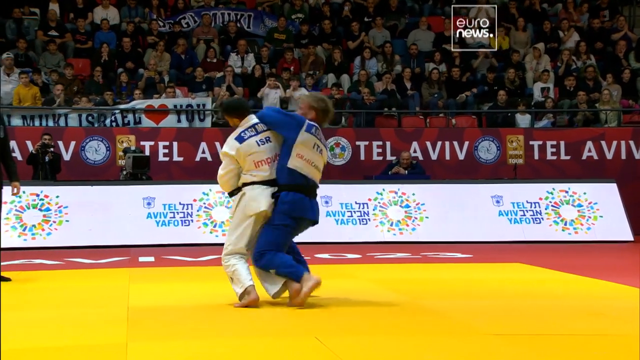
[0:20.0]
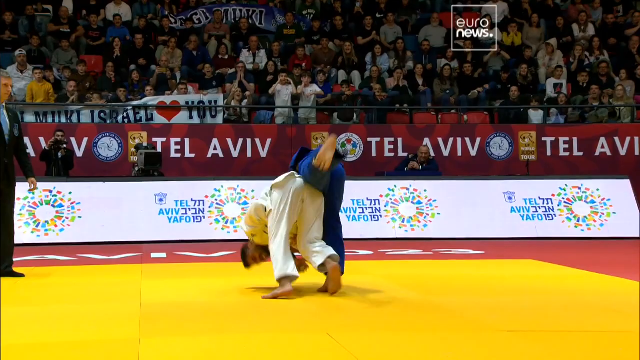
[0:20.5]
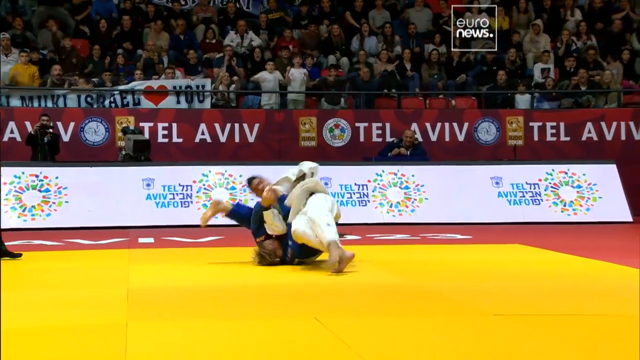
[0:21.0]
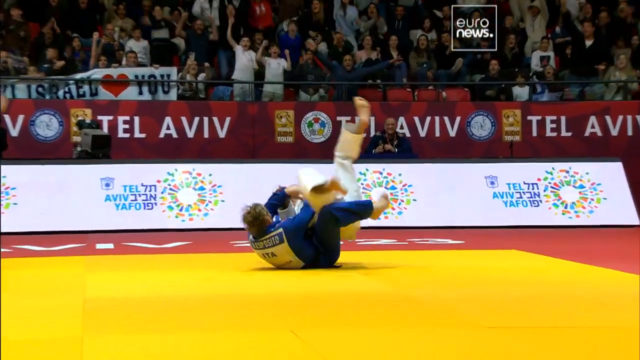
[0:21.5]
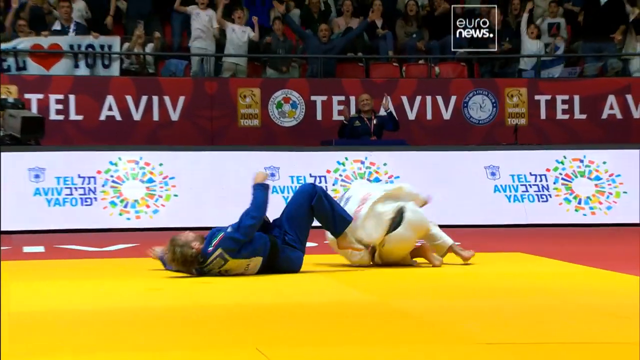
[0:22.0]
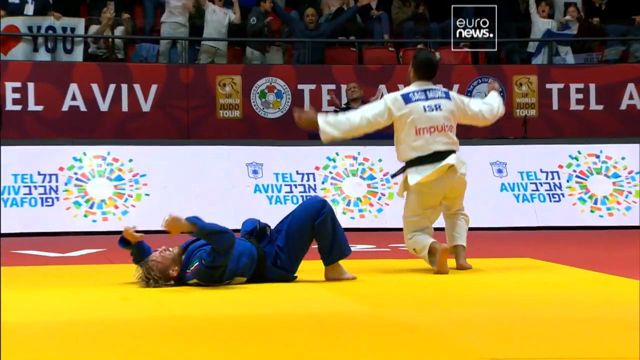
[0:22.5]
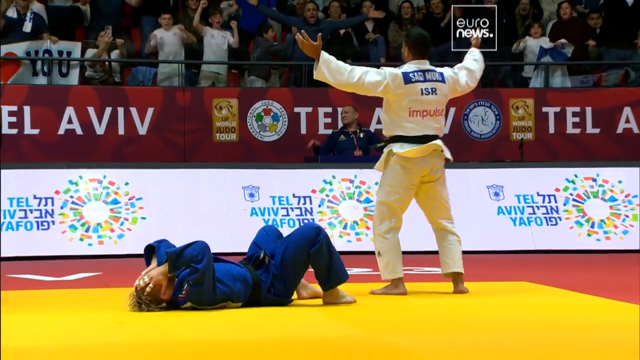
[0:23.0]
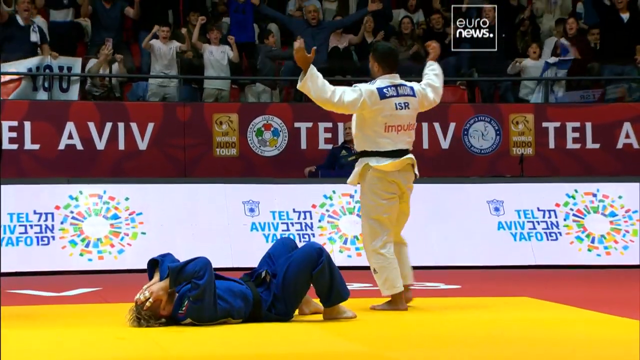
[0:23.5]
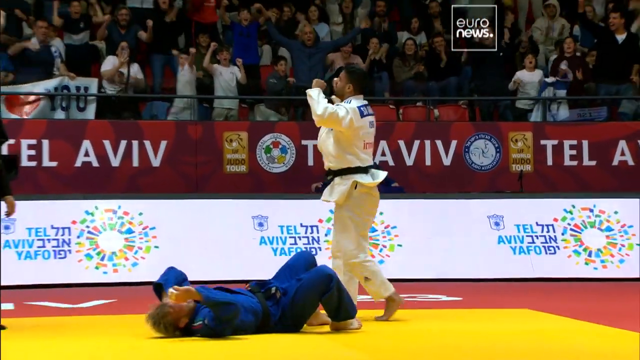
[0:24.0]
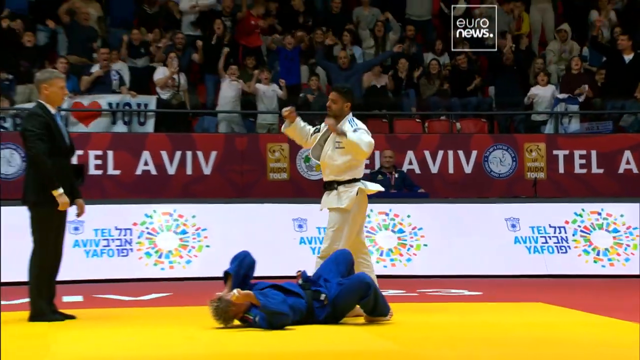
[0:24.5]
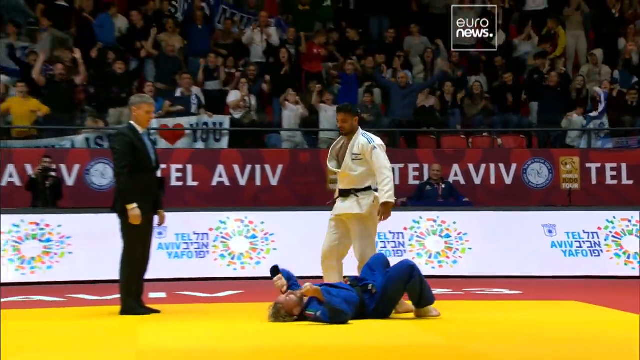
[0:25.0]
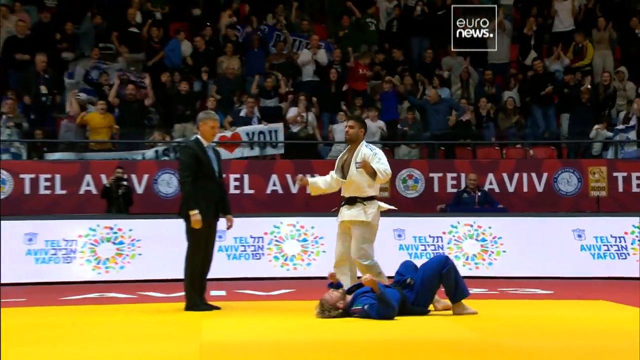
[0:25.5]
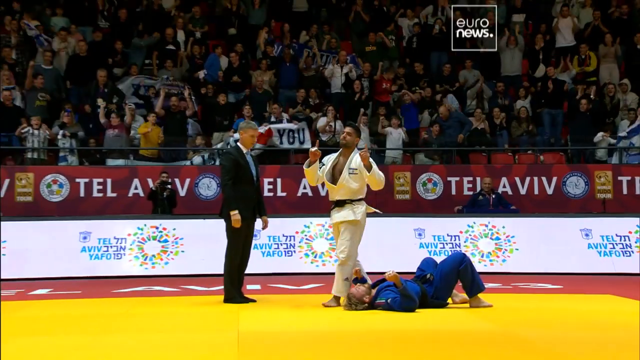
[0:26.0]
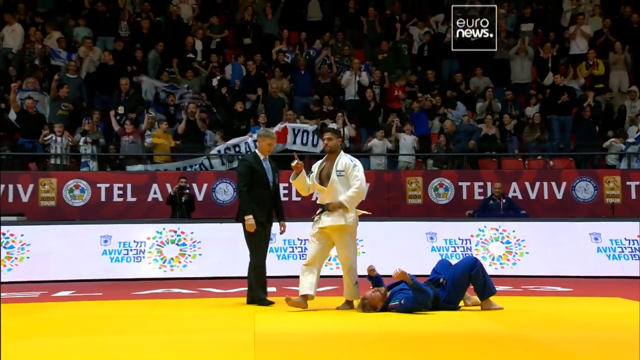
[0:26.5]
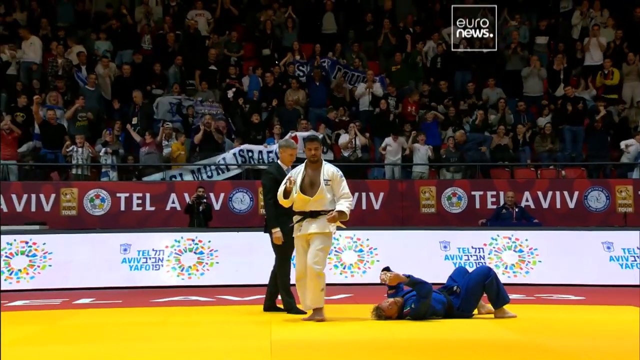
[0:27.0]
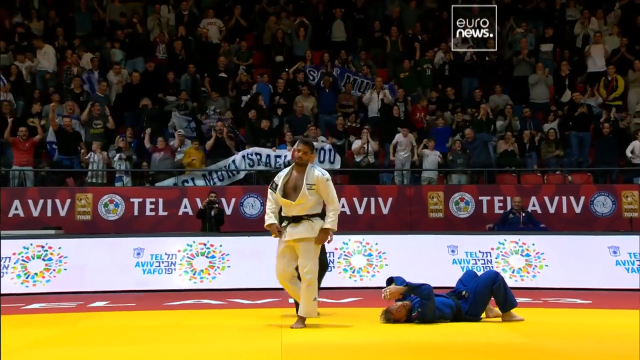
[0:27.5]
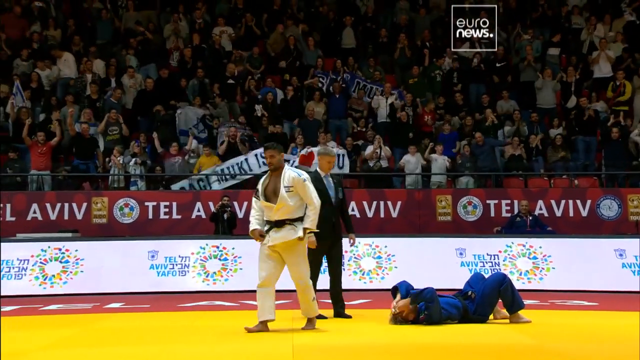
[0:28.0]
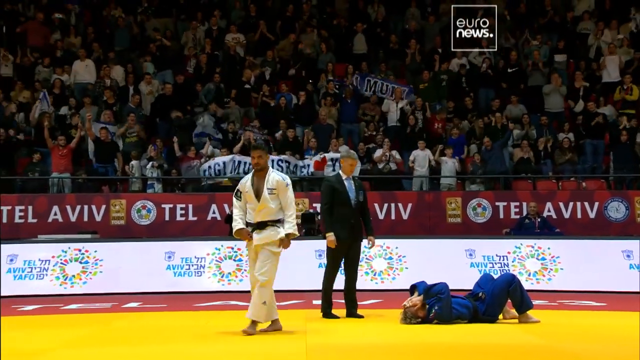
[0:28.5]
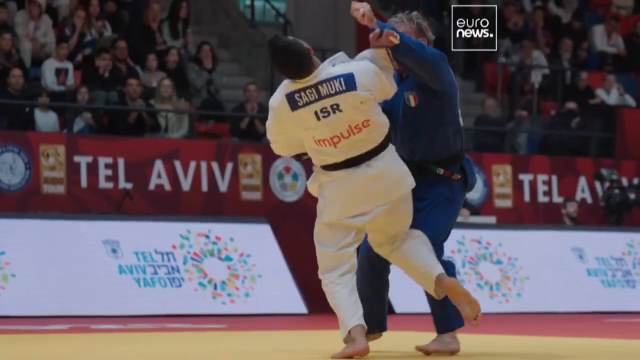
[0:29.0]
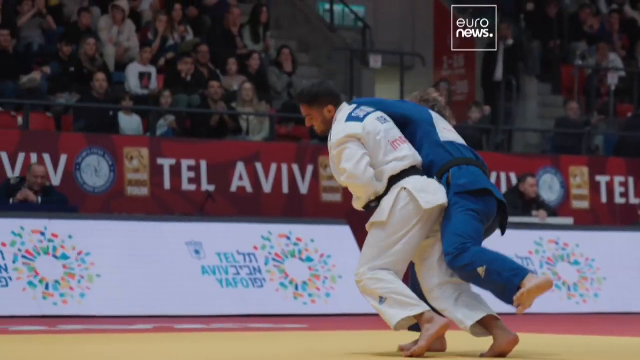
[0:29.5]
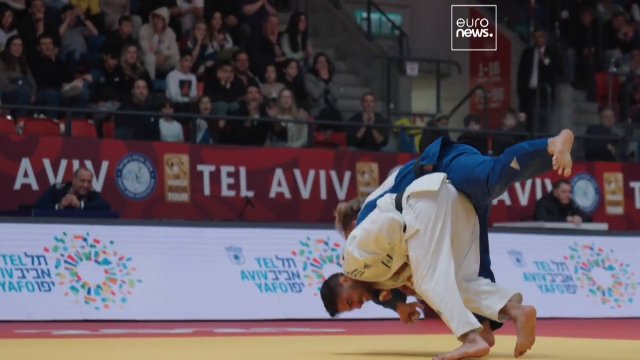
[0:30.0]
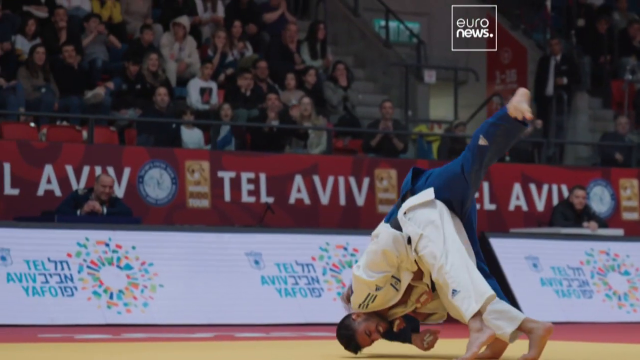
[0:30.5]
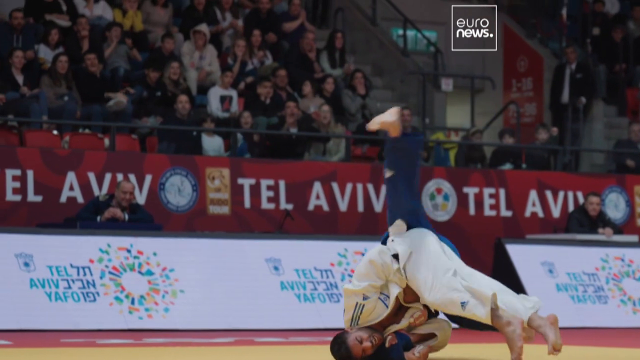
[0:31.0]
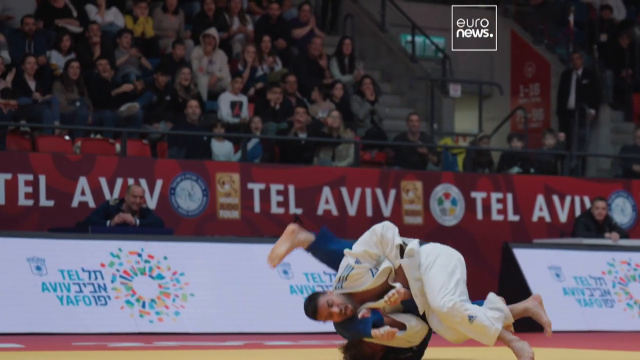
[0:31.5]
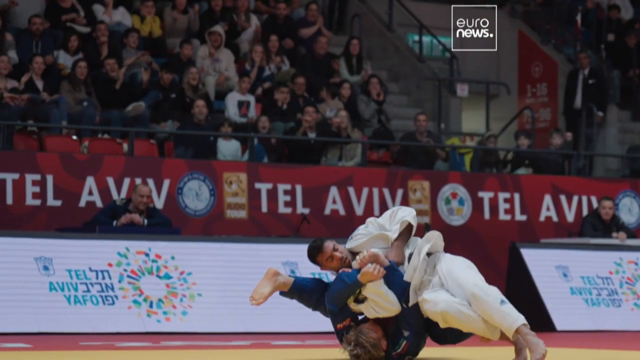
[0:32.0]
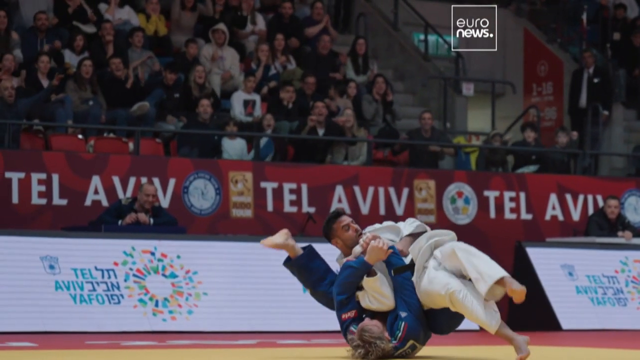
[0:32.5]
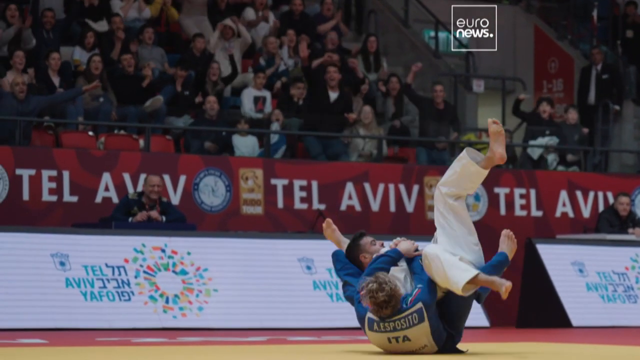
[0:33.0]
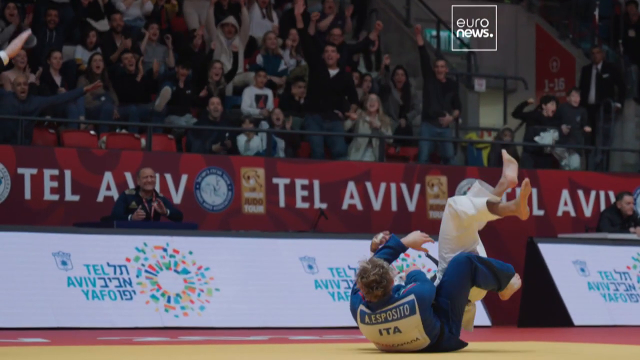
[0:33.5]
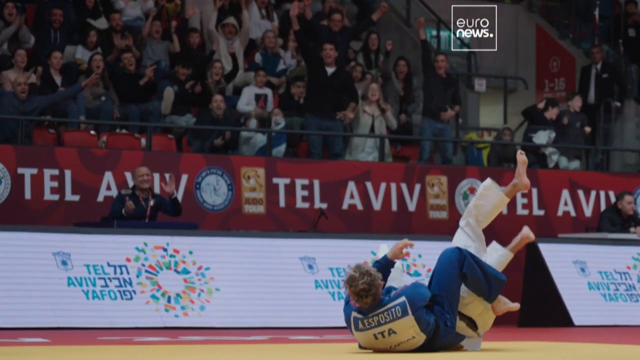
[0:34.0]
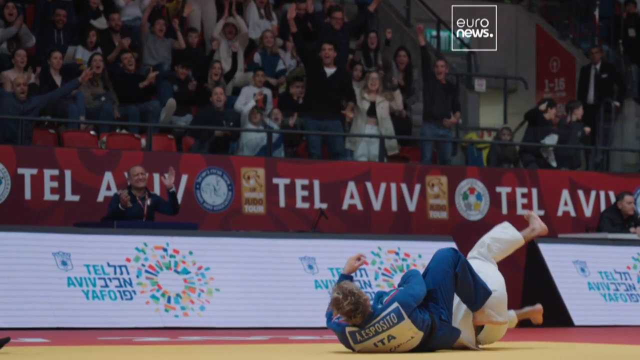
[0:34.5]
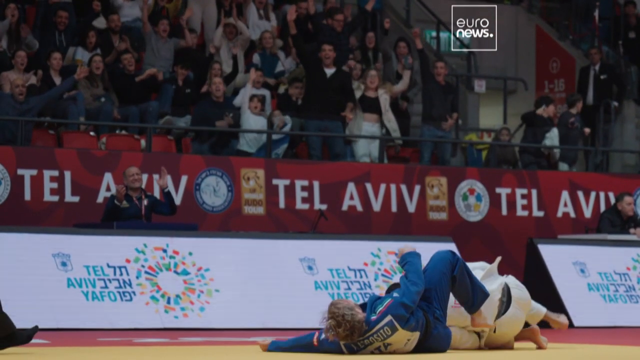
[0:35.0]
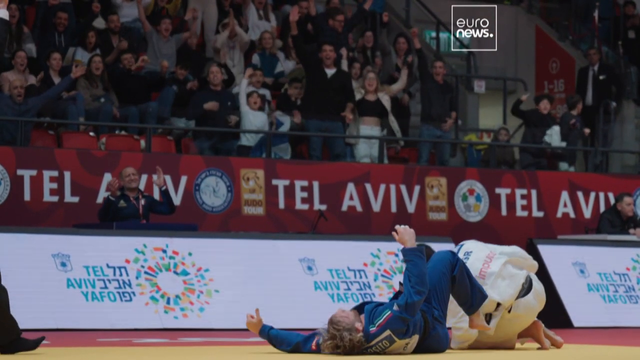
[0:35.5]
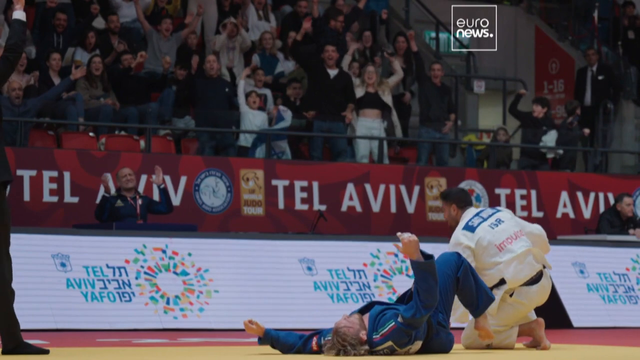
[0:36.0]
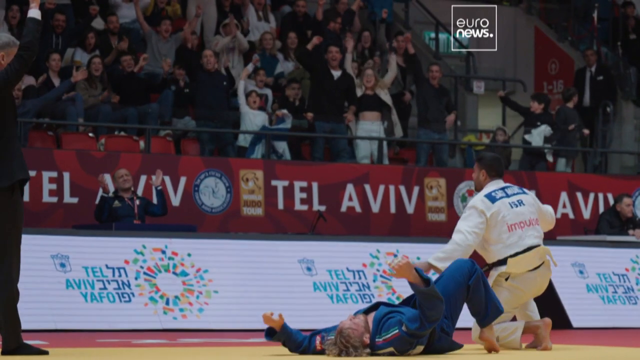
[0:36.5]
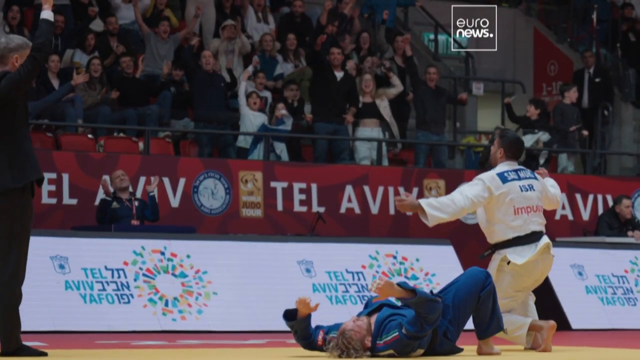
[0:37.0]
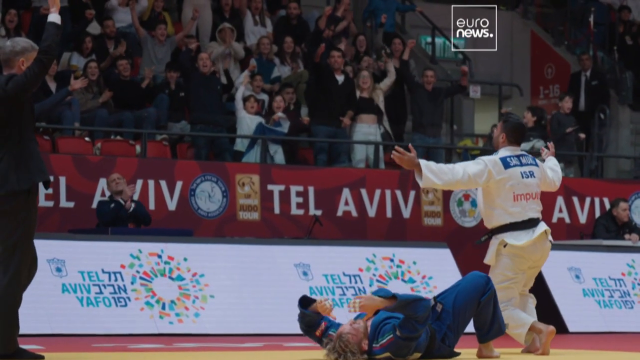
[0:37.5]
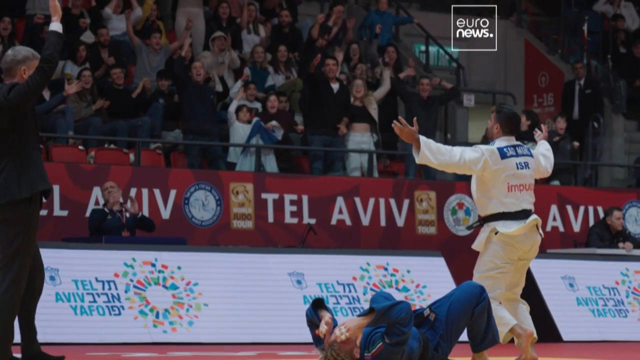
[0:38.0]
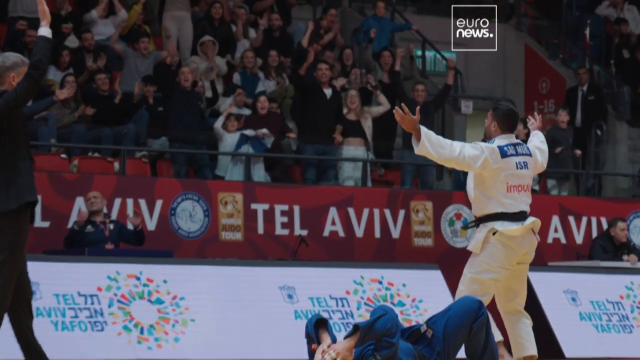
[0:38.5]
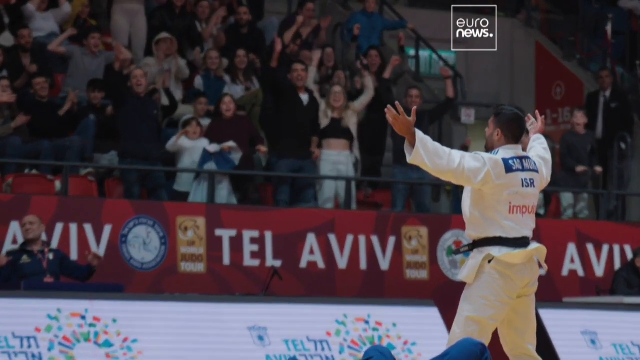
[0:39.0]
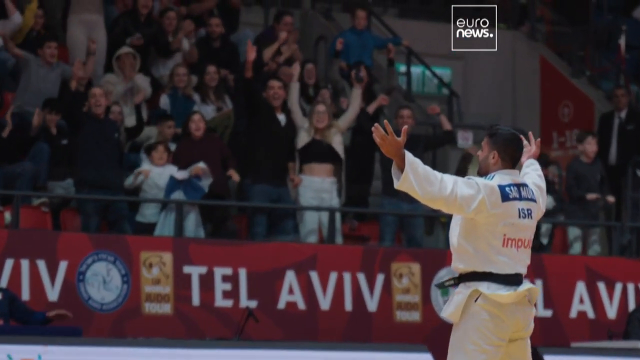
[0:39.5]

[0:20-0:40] In a sports stadium, "Tel Aviv" is written on a red banner. People in the crowd hold a long white banner that reads "Mickey Mookie Israel love you", possibly "Israel loves you". The man in white wears what appears to be a judo uniform, a white top and white pants with a black belt, and fights a man in a blue top and blue pants who looks like an Italian fighter, with "ITA" on his back. The Israeli fighter flips the blue fighter over. The blue fighter appears dejected, lying on the ground with his hands over his face, while the Israeli fighter gets up and puts his arms in the air, apparently having won. The crowd chants vigorously with their arms up in the air. A slow-motion replay shows the flip: the Israeli fighter appears to throw his opponent by the arm onto his back, then does a roll, gets up and celebrates.